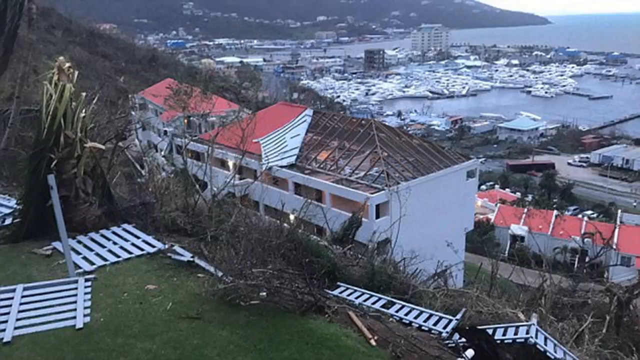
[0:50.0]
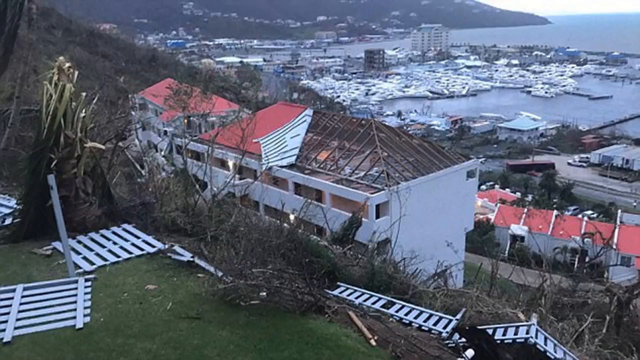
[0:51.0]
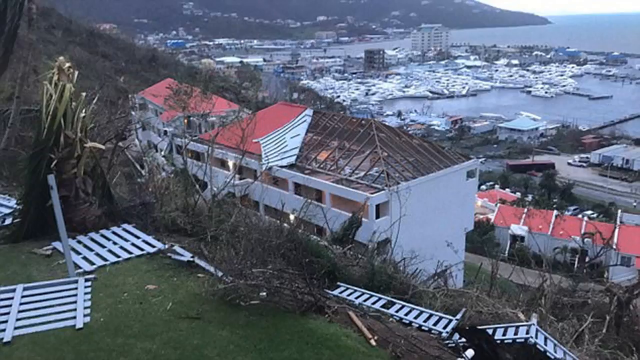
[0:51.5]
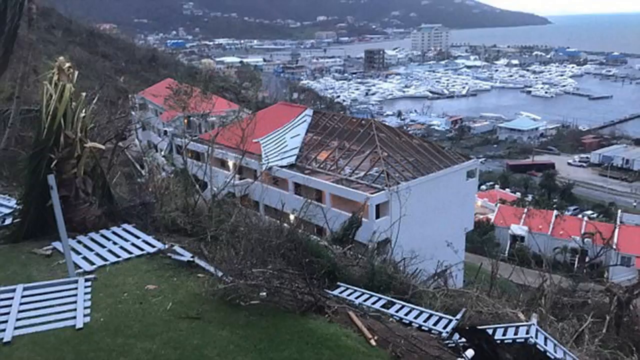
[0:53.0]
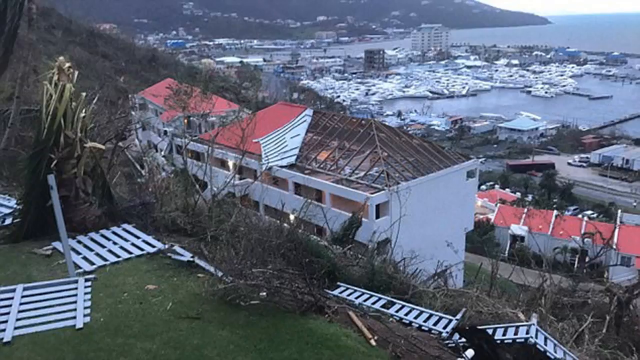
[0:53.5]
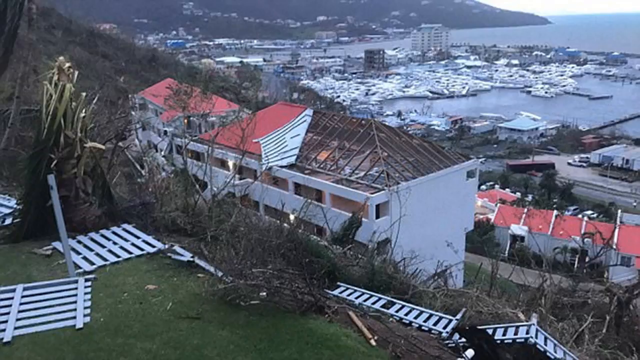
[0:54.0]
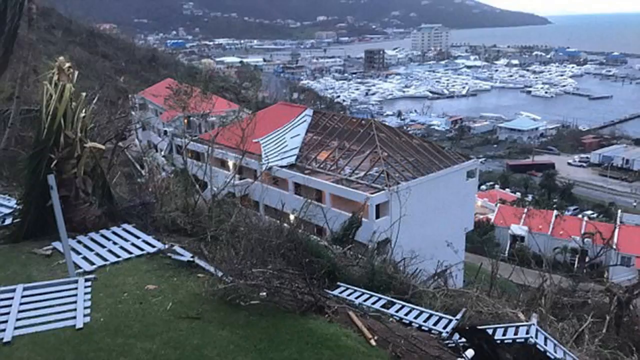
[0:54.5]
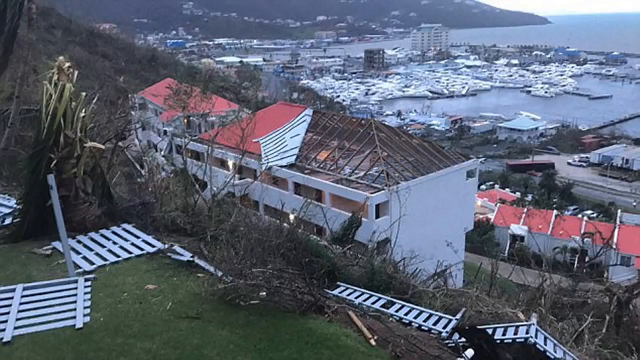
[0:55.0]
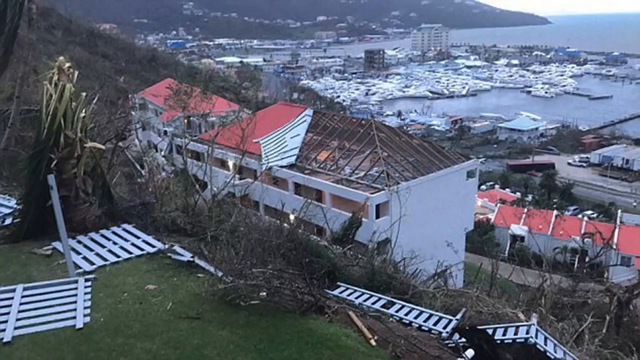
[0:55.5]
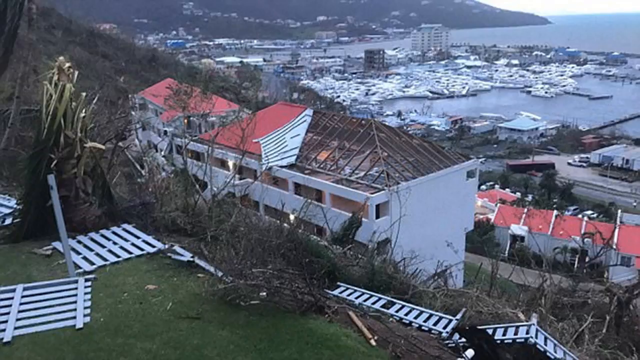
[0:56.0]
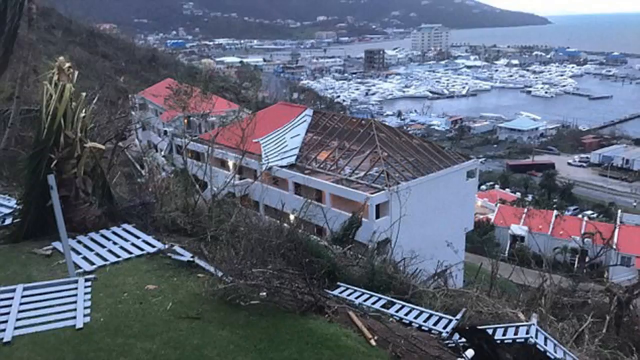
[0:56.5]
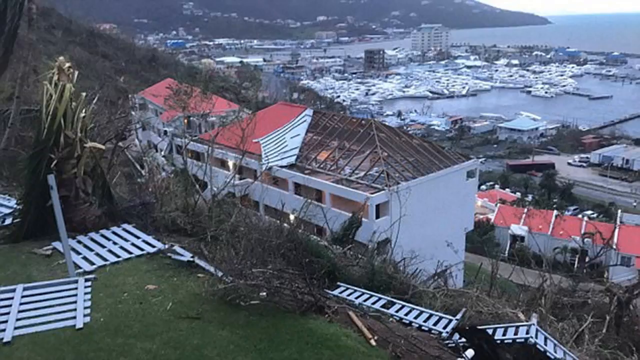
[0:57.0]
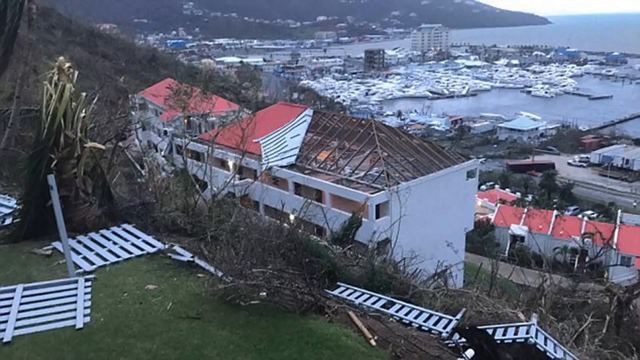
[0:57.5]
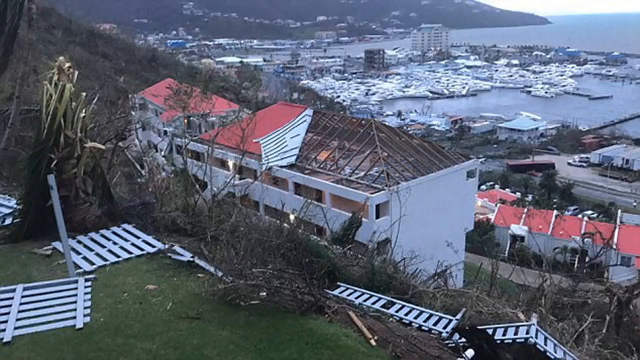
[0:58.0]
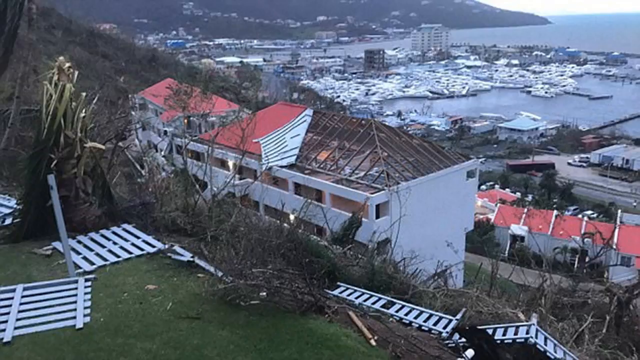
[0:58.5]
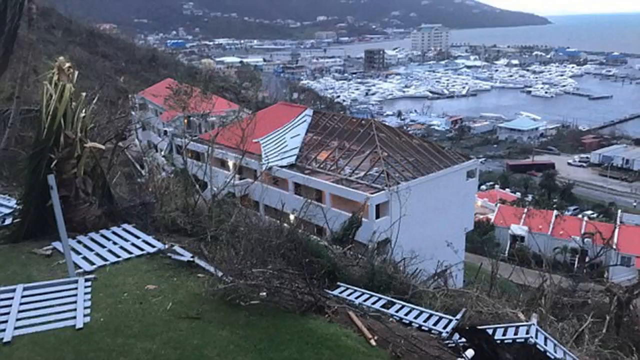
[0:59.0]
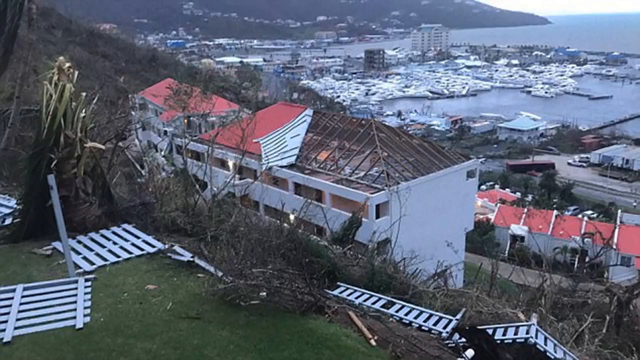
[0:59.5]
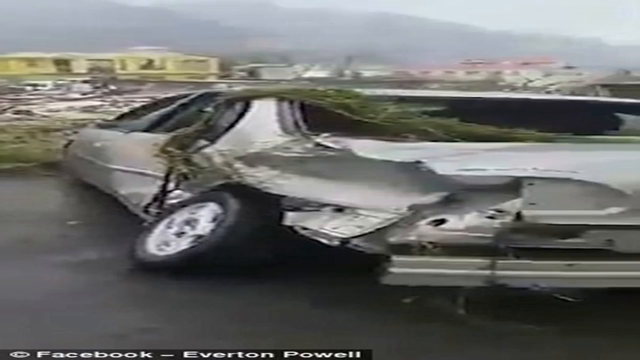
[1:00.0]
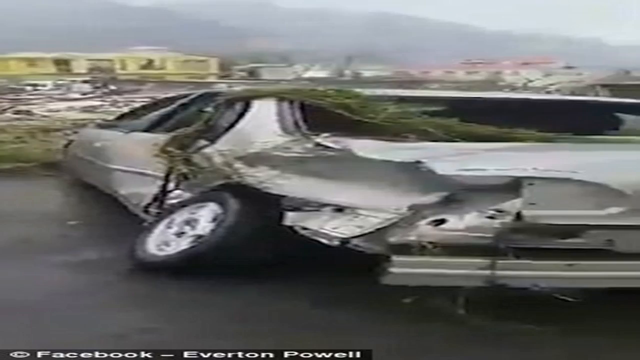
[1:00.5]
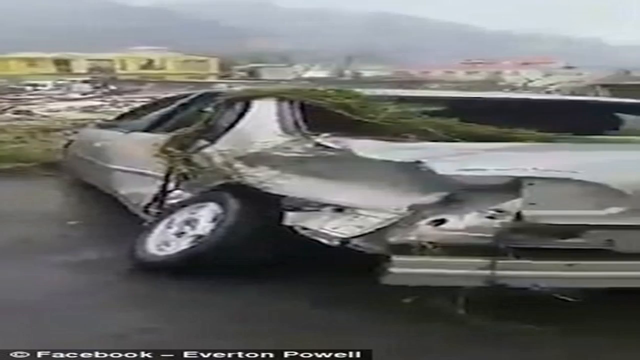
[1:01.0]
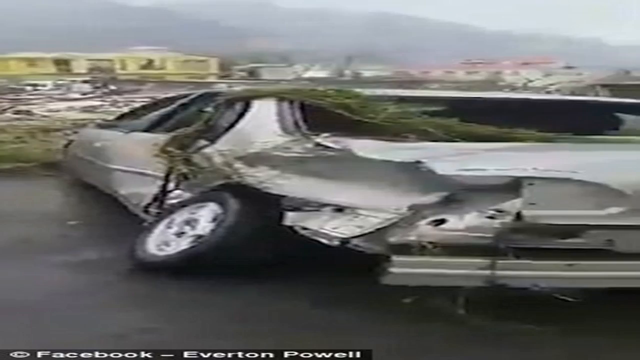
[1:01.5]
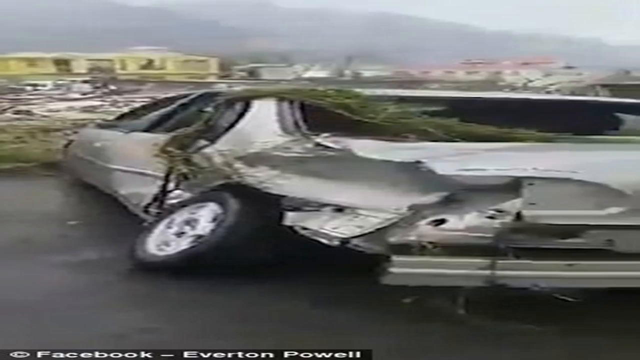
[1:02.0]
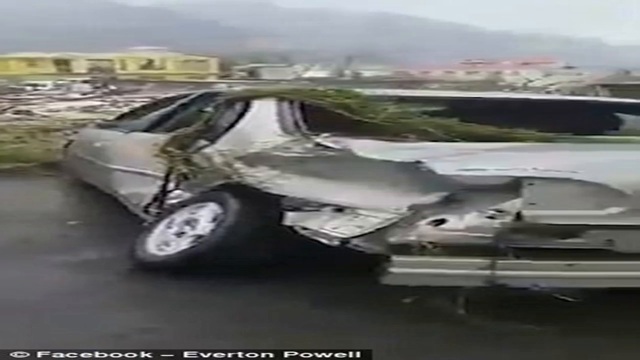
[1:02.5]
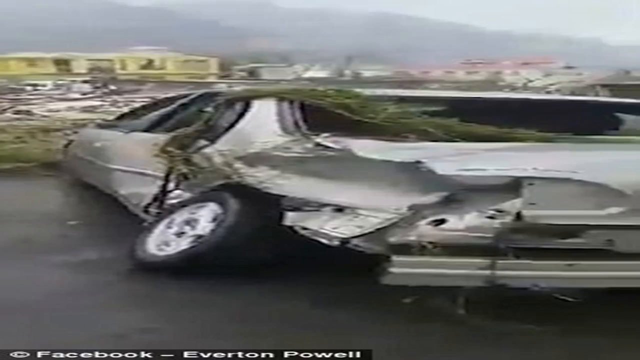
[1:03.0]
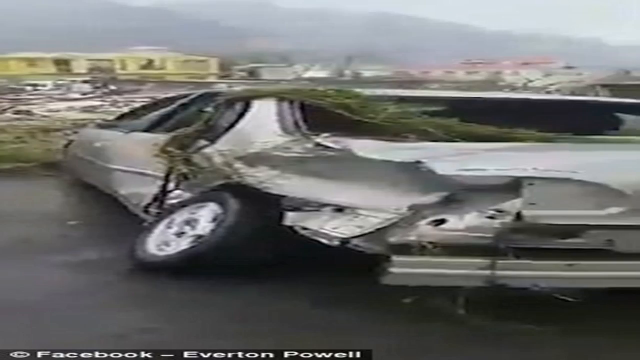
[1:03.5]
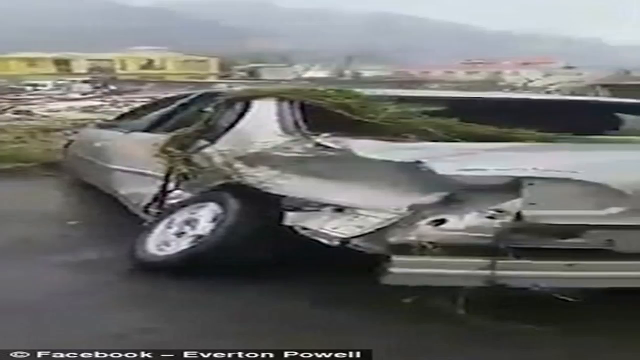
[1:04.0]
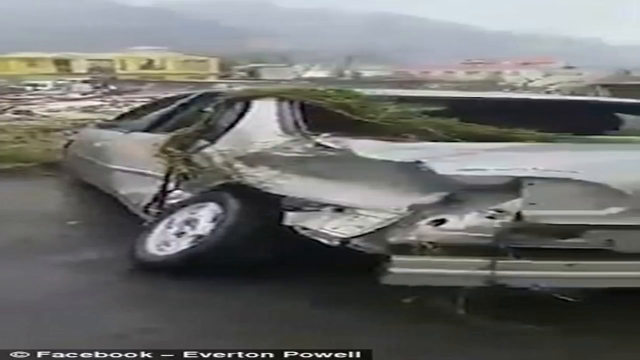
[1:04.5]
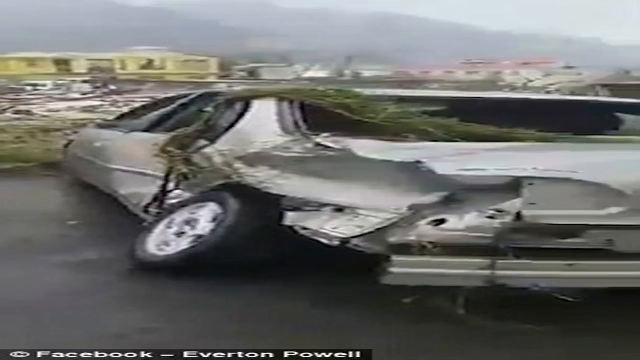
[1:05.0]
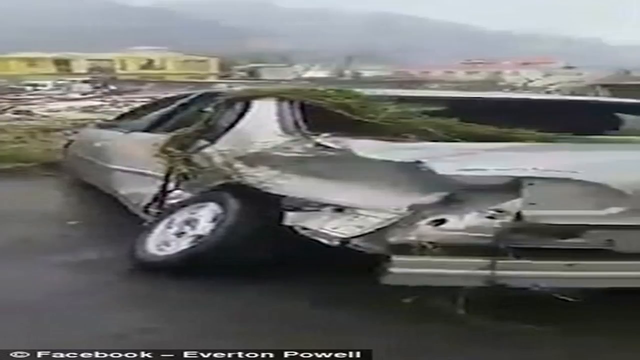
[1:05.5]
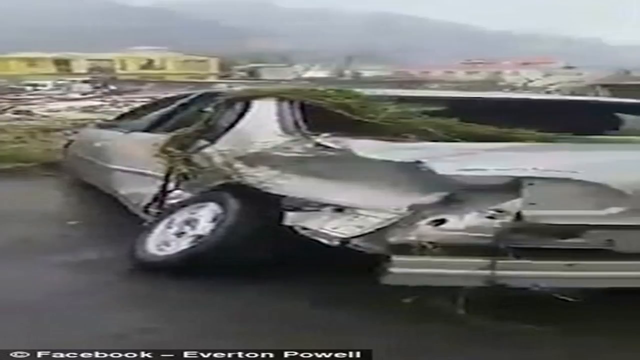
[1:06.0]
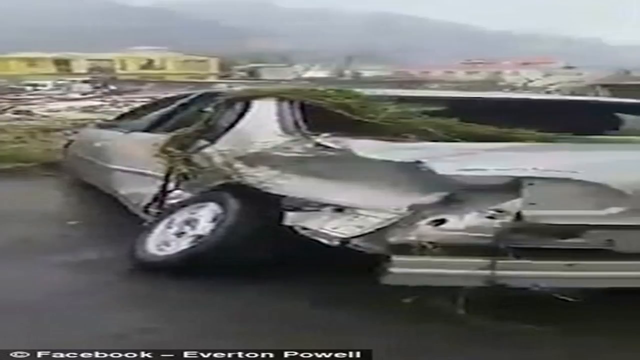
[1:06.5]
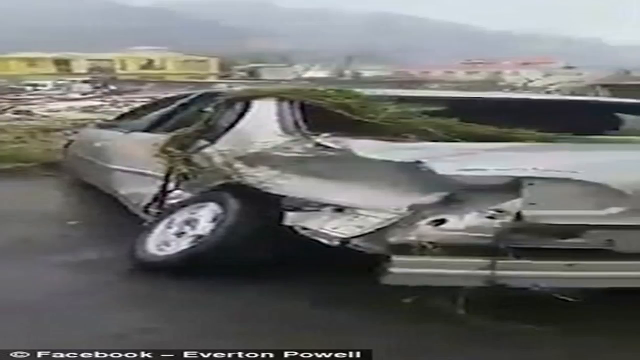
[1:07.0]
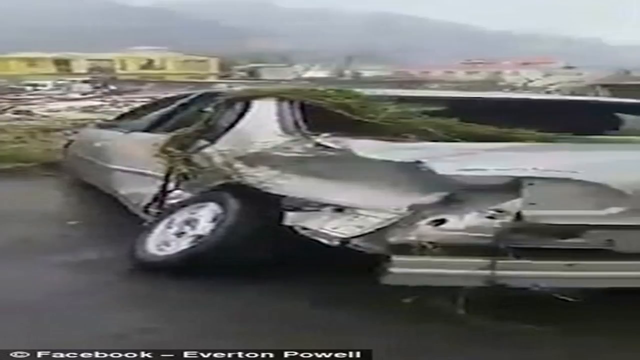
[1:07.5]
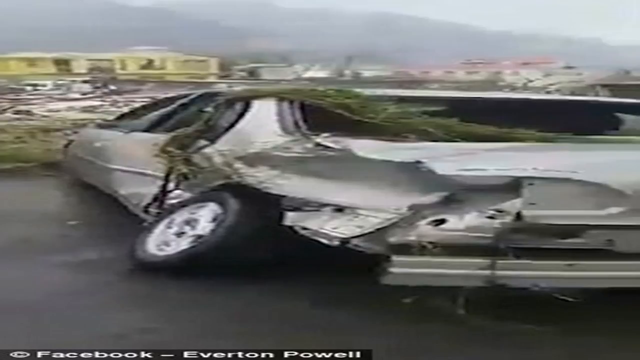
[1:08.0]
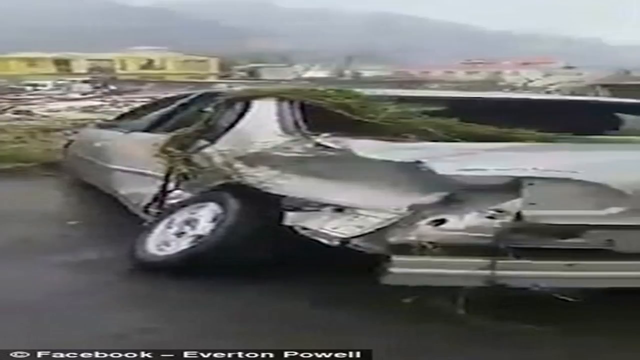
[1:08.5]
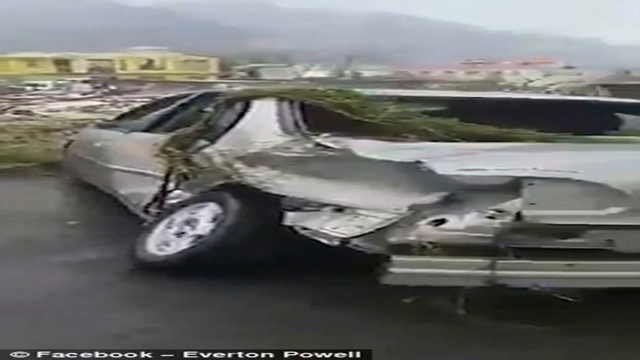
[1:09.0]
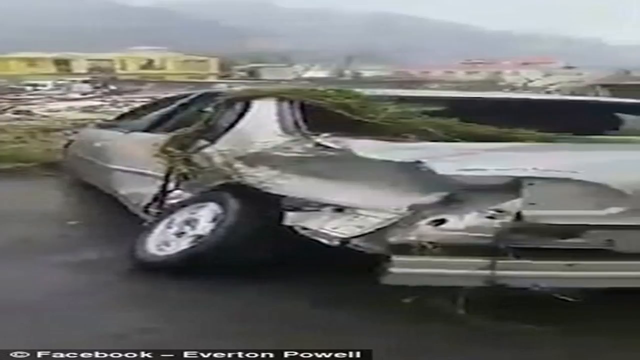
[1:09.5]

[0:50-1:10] A still image shows what looks to be a city on an island, on the water, with the ocean visible. It focuses mainly on a hilltop above the city, where the buildings appear to be heavily damaged, possibly by a hurricane. Trees, debris, bushes and broken fences lie on the ground, seemingly also affected by the storm. The video then transitions to another still image, very low quality and blurry, showing a heavily damaged four-door sedan, apparently wrecked by some kind of hurricane. At the bottom it indicates that the image is from Facebook, by Everton Powell.